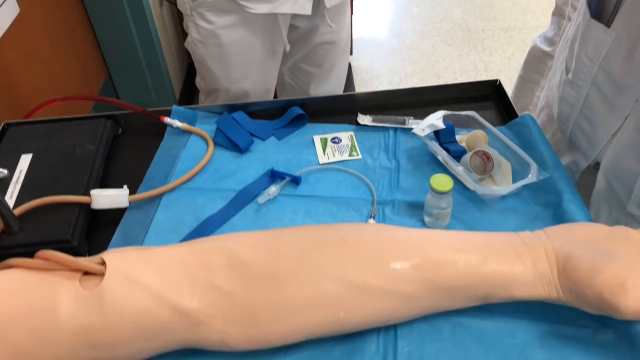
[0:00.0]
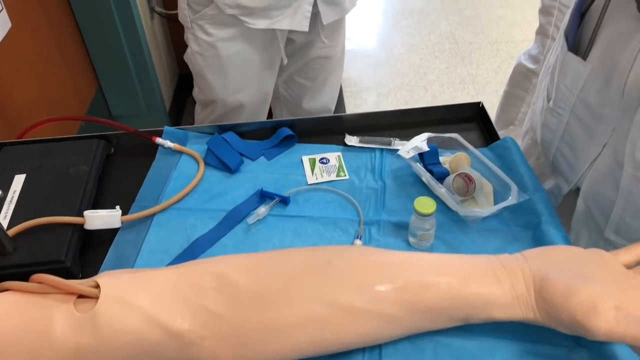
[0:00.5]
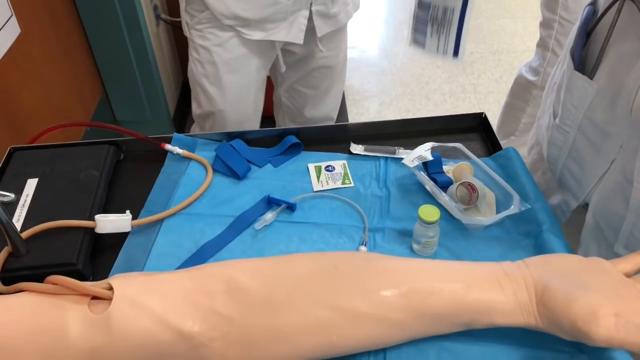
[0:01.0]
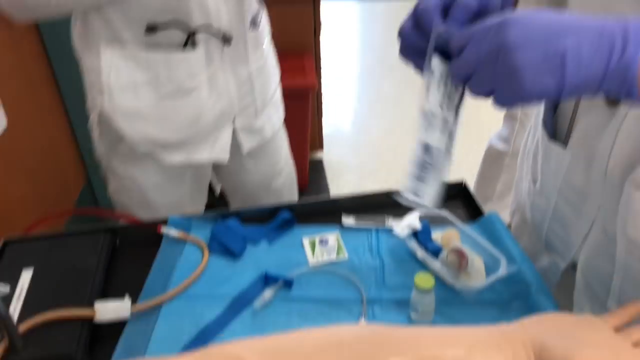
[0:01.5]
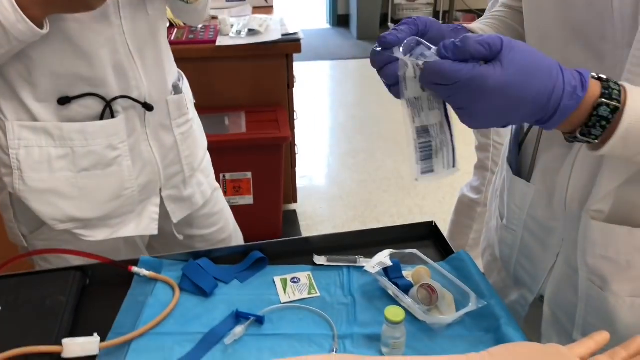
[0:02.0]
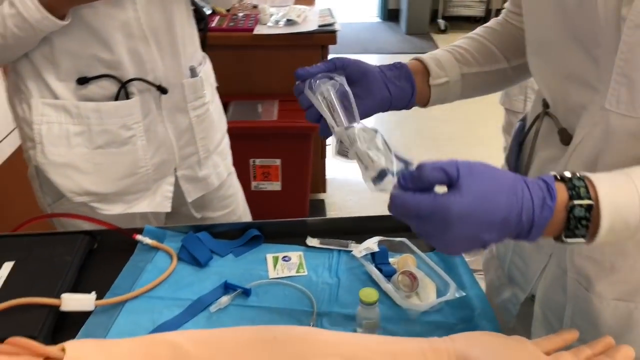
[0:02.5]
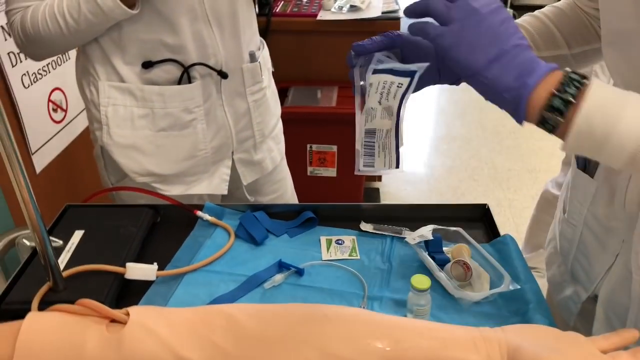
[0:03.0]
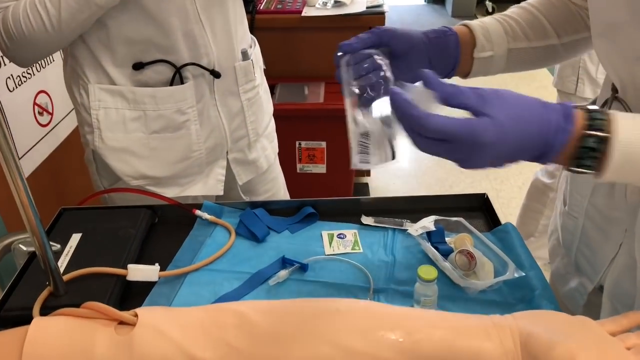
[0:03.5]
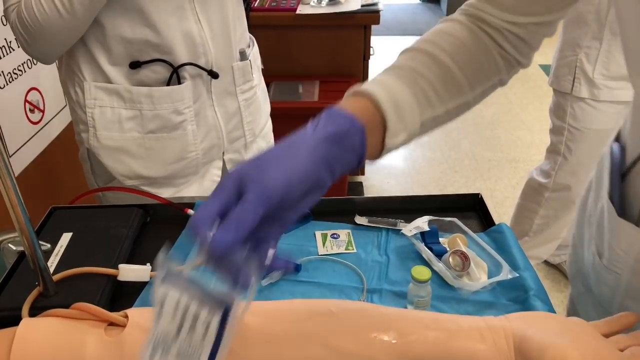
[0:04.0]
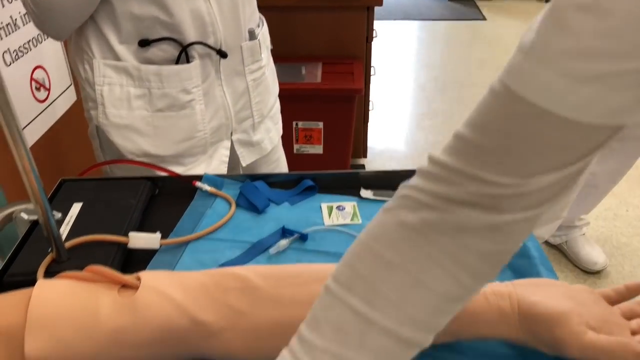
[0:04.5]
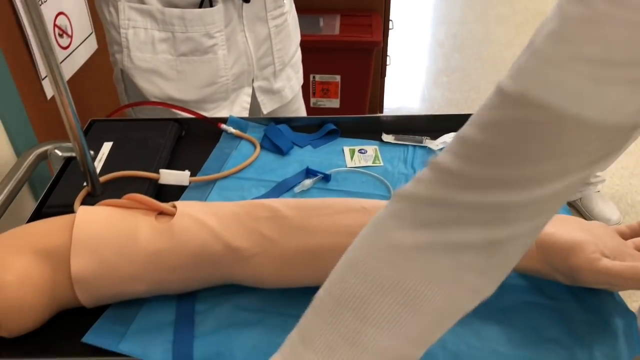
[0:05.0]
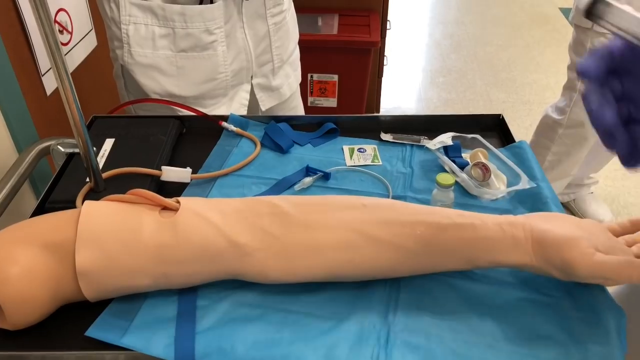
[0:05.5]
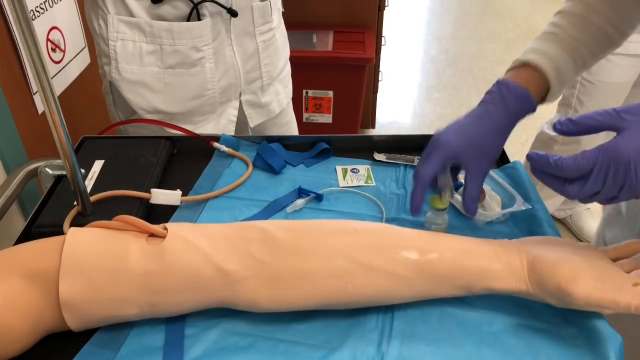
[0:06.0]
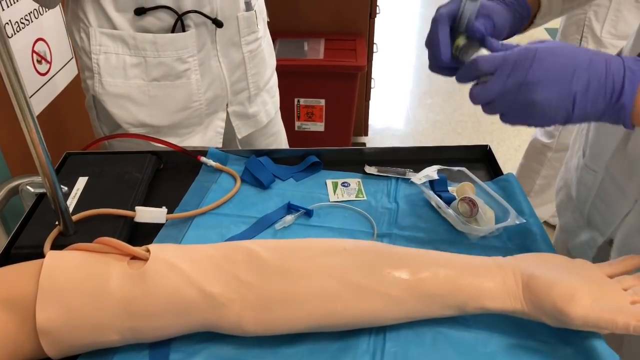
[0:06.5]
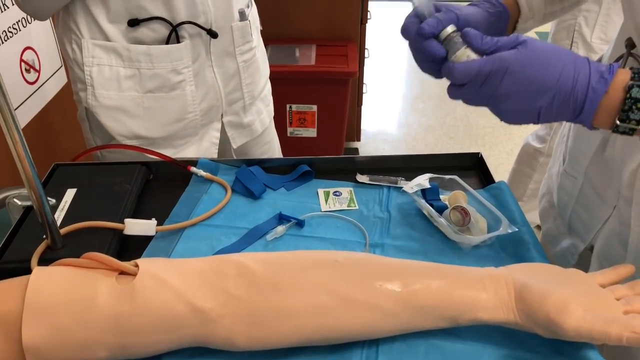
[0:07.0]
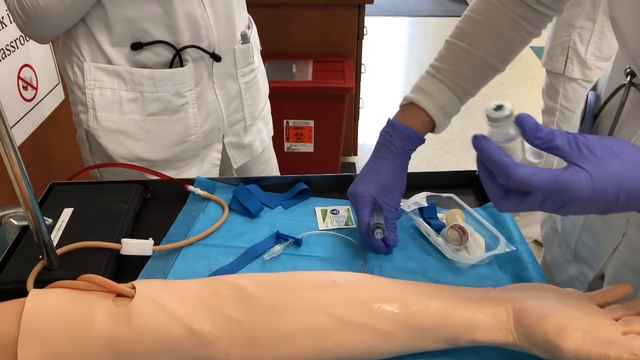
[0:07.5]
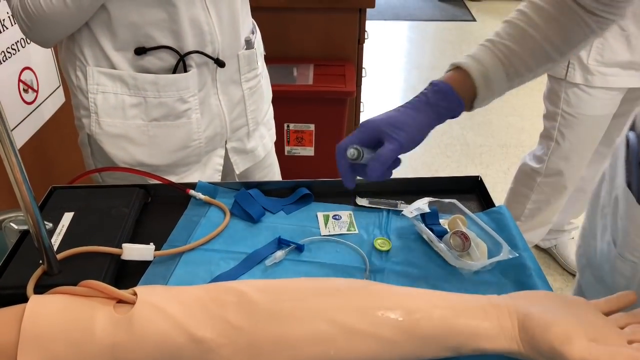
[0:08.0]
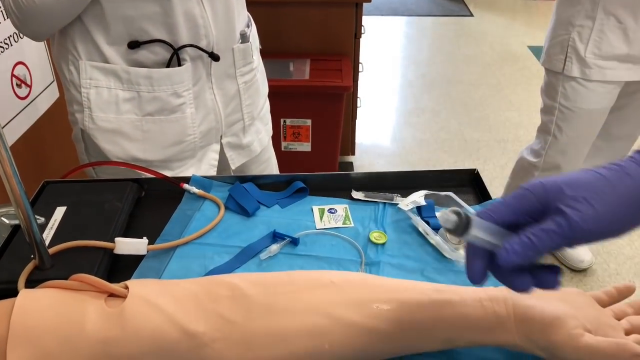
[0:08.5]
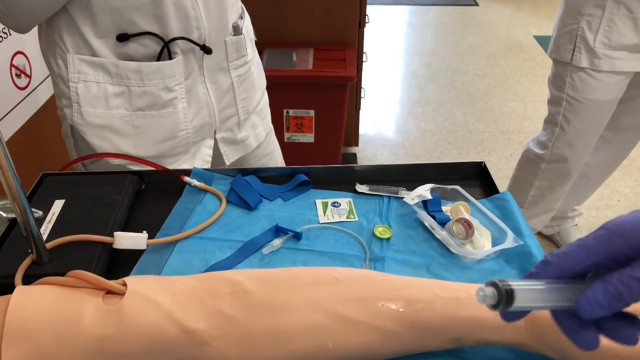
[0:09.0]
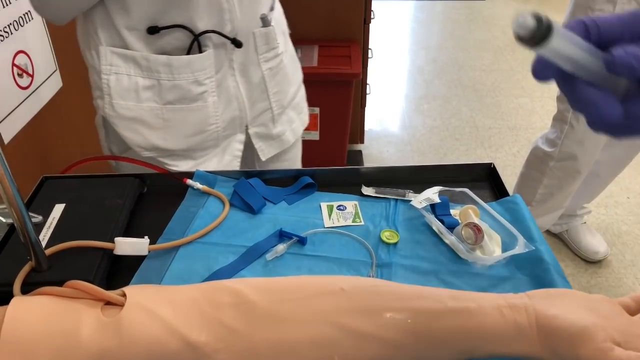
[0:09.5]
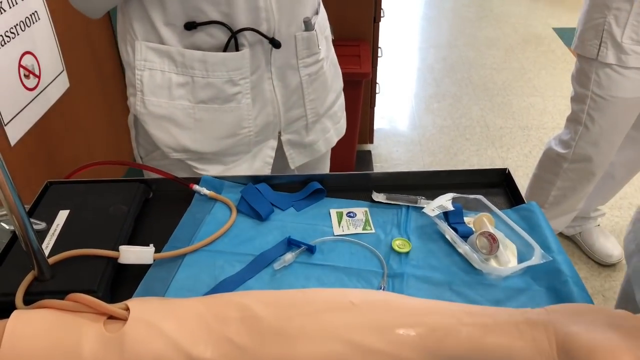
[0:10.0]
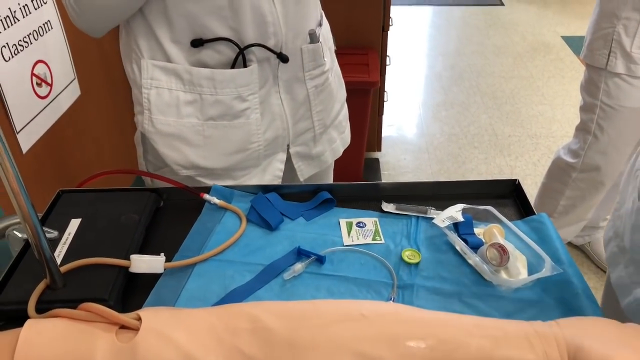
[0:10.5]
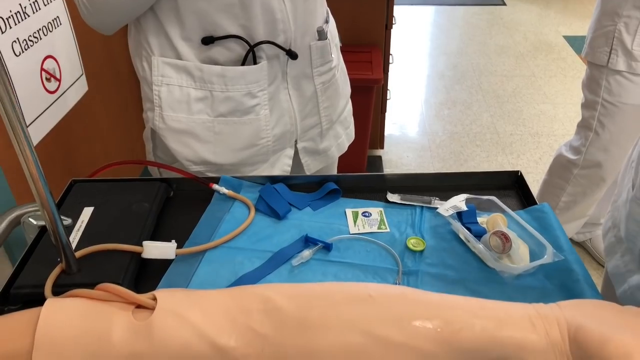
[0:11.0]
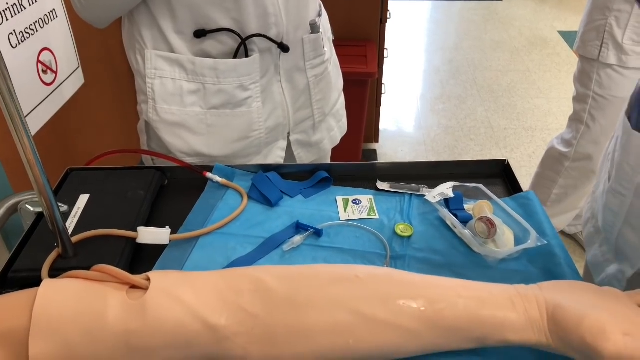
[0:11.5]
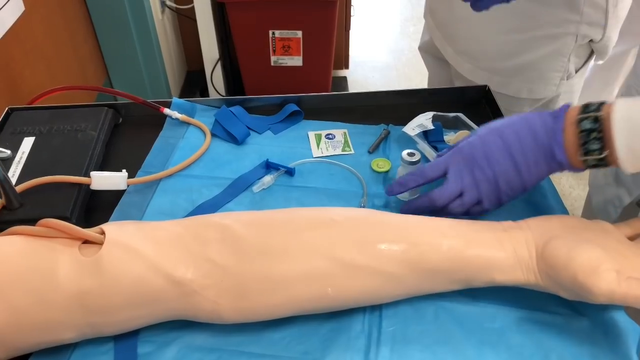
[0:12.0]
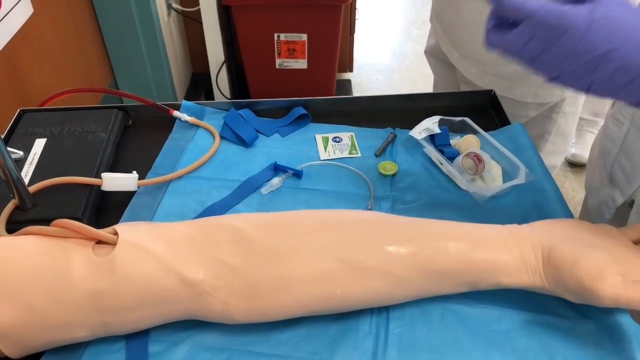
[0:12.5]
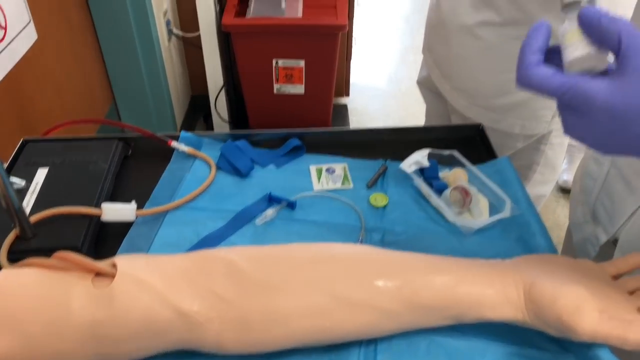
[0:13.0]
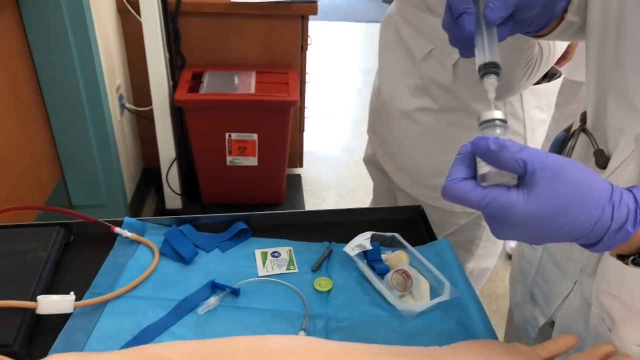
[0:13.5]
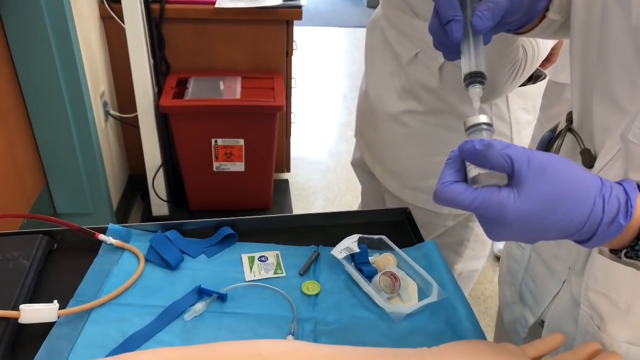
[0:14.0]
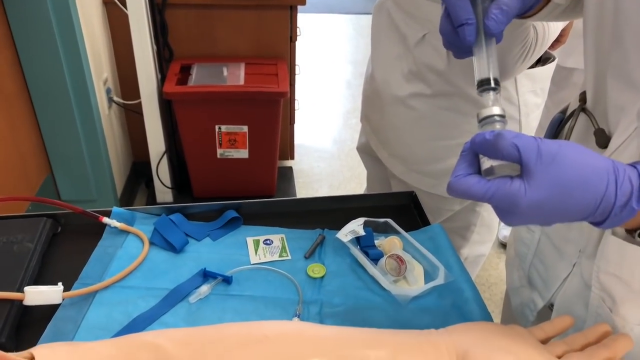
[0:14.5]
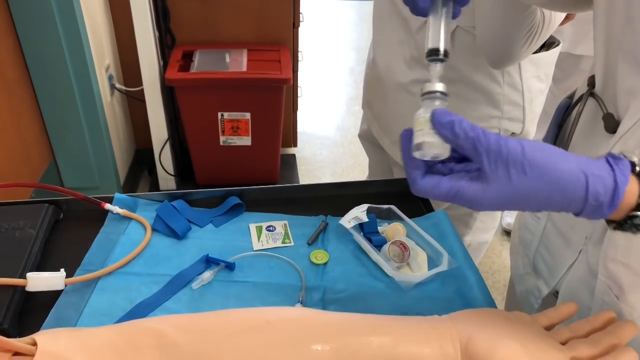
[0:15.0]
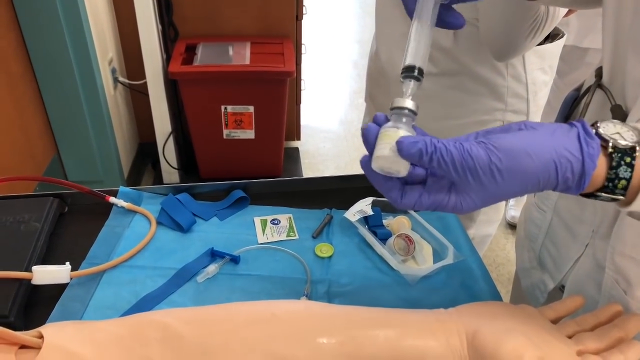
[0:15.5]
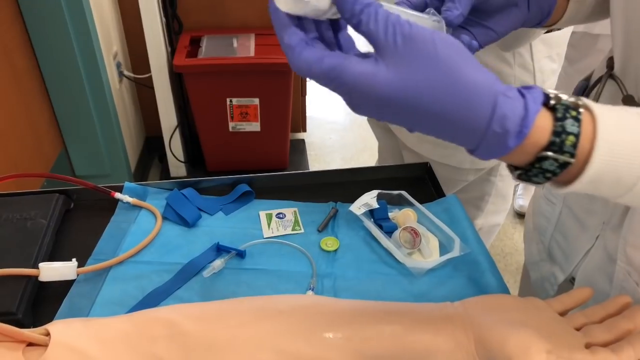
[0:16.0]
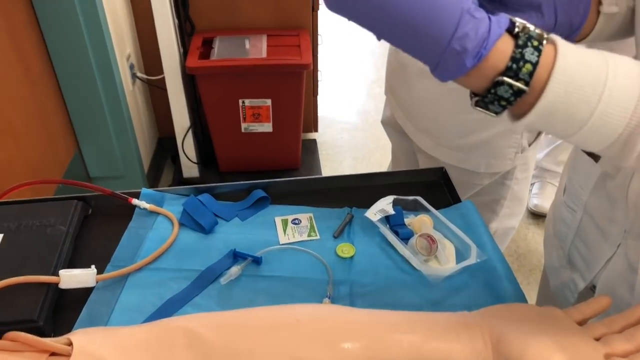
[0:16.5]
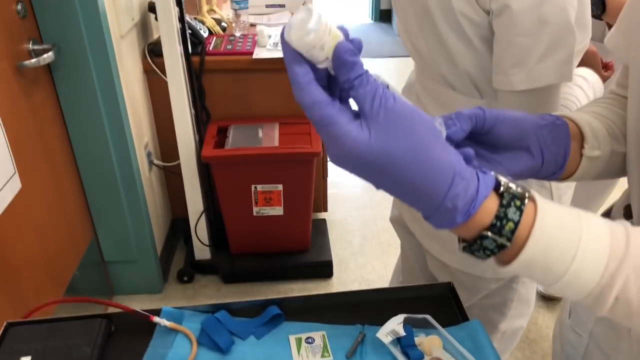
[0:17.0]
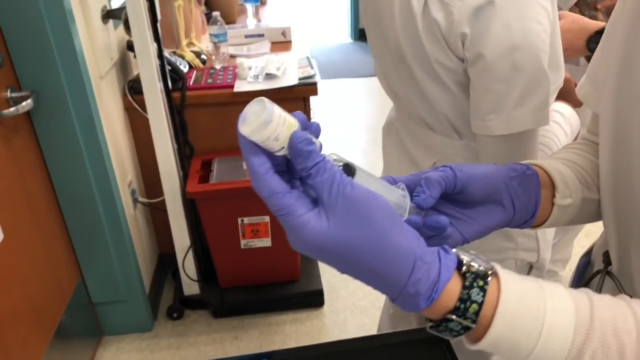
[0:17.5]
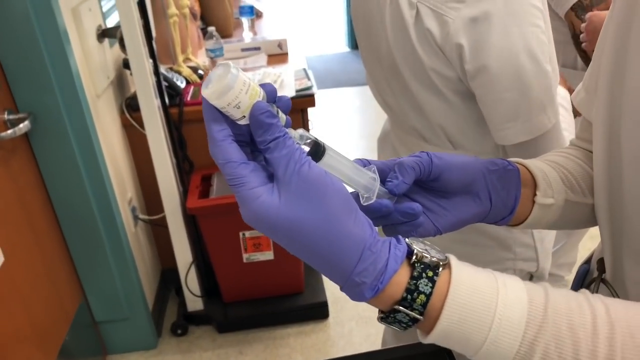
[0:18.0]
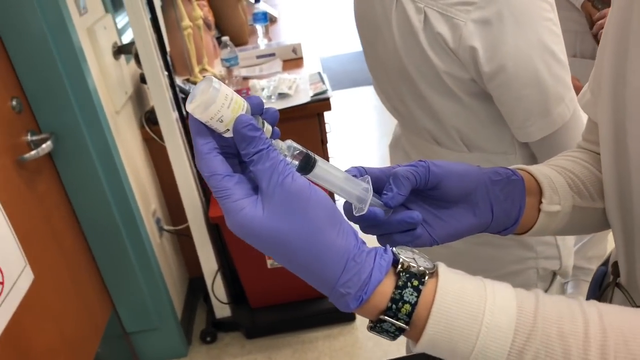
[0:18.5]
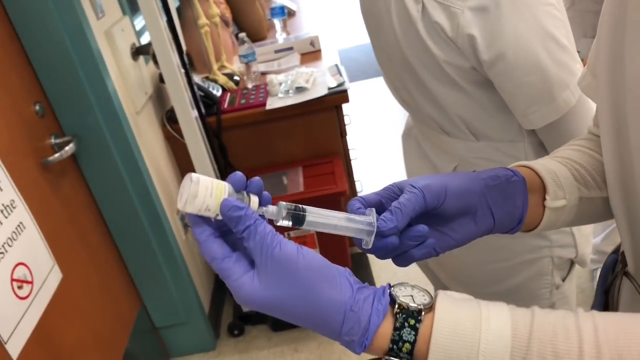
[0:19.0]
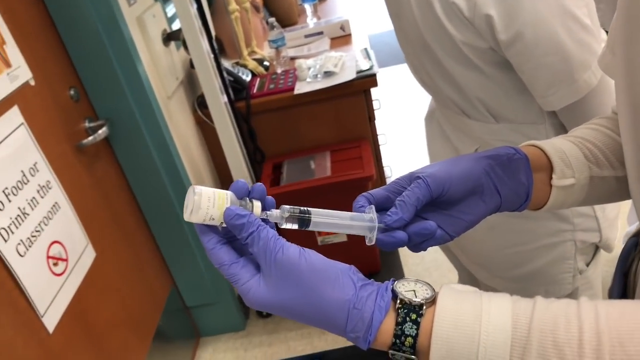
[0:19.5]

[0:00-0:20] A black cart has a blue medical protection mat on top of it. A Caucasian phlebotomy practice arm is tied up to a fake blood tube that goes down into the arm. There appear to be three medical professionals in white lab coats and white lab pants. On top of the cart and the blue mat are two blue tie-off ribbons for the practice arm, one unopened alcohol swab, one closed vial of liquid, an open package of medical supplies such as tape, tie-off bands and other things, and an unopened needle. A medical professional takes the vial of liquid and opens the needle. The liquid is clear, and the vial has a green cap. Holding the vial in his left hand, the medical professional sticks the needle into it with his right hand and extracts the liquid, withdrawing the full amount of the vial to fill the needle. He then pulls the needle out of the vial and puts the vial back down on the blue mat.